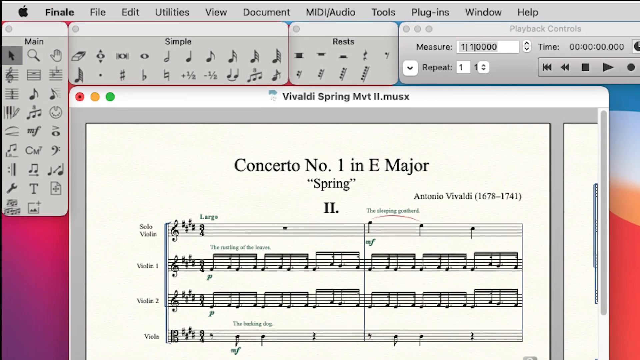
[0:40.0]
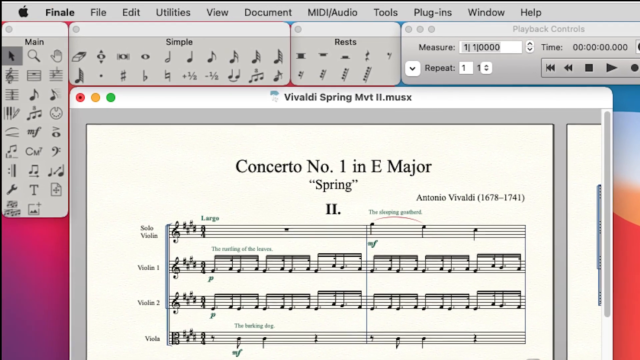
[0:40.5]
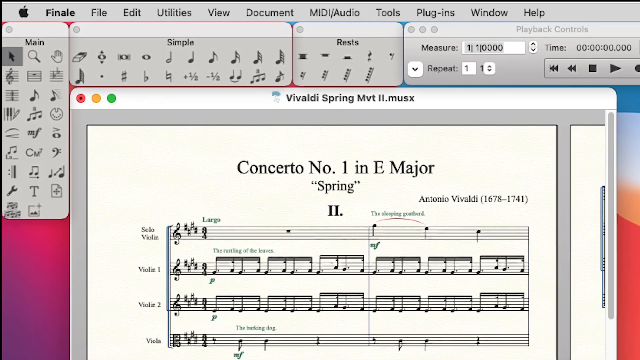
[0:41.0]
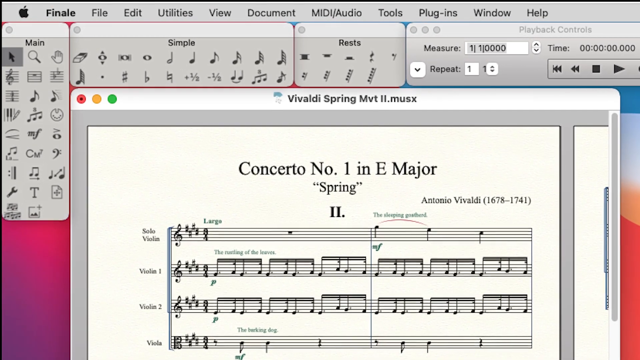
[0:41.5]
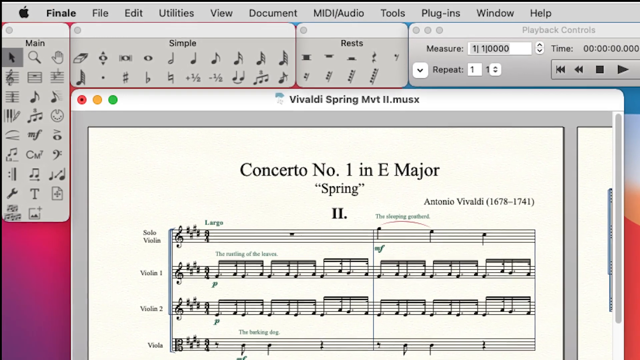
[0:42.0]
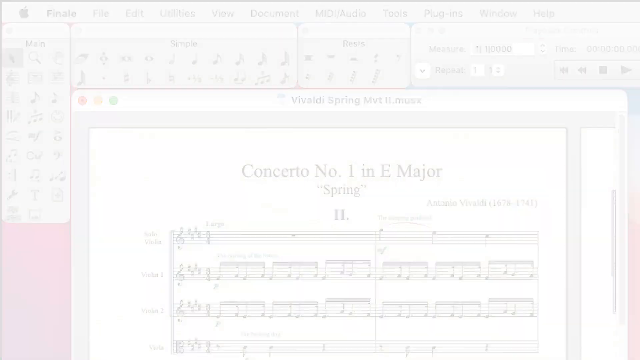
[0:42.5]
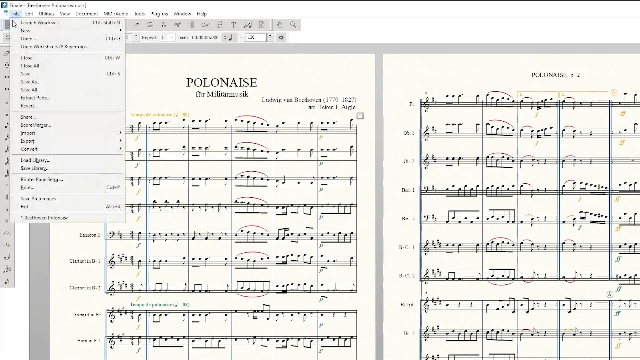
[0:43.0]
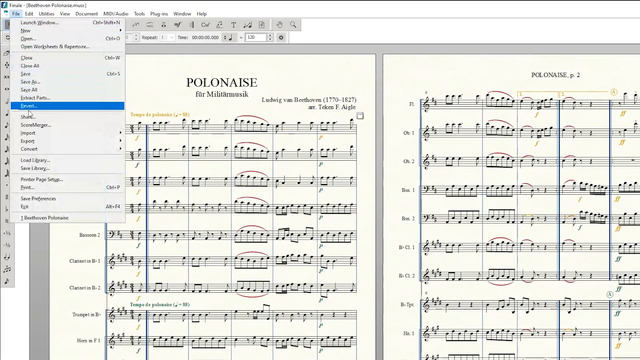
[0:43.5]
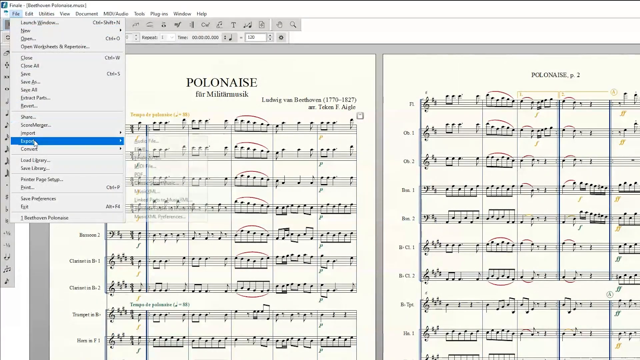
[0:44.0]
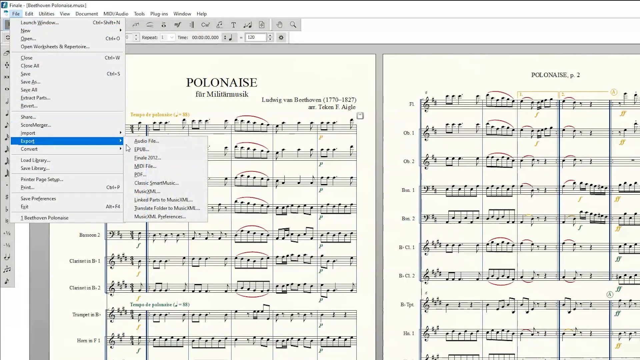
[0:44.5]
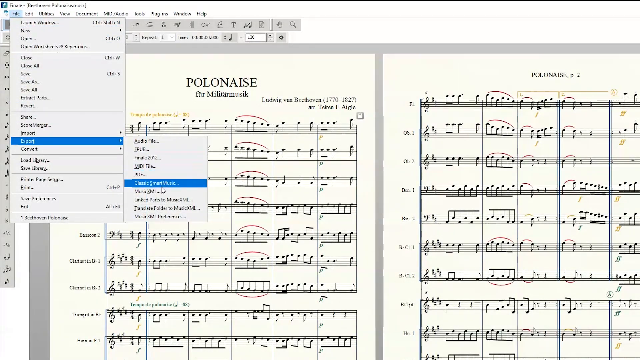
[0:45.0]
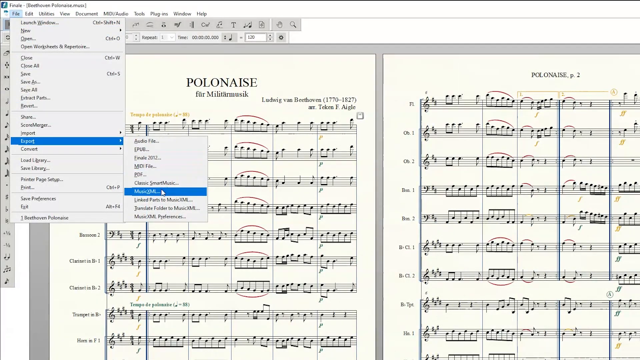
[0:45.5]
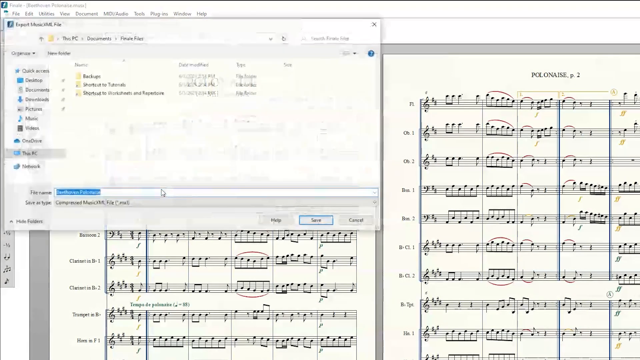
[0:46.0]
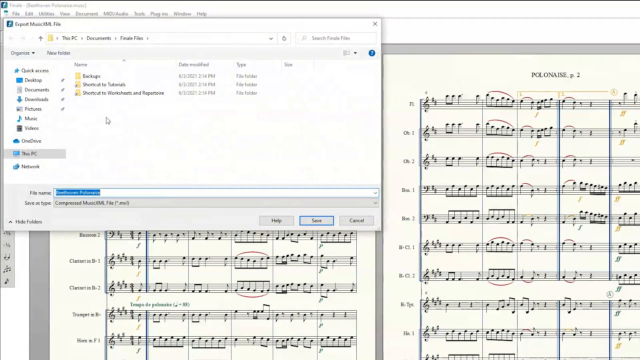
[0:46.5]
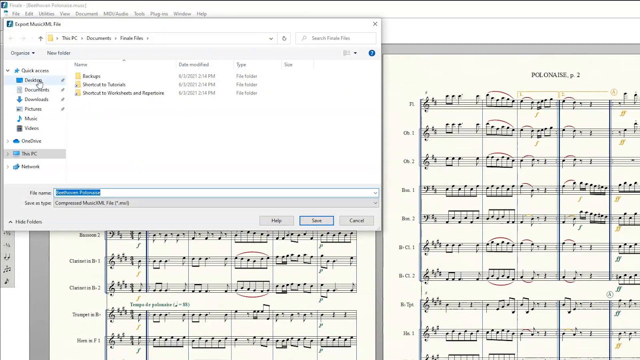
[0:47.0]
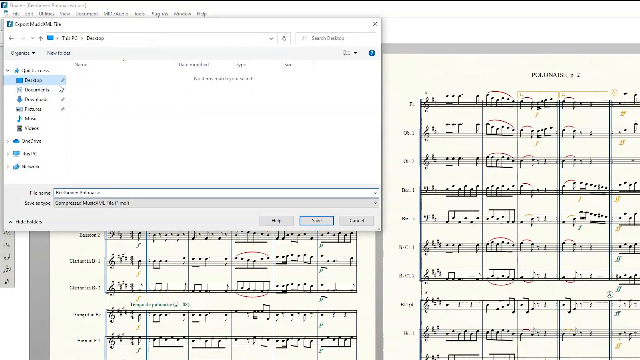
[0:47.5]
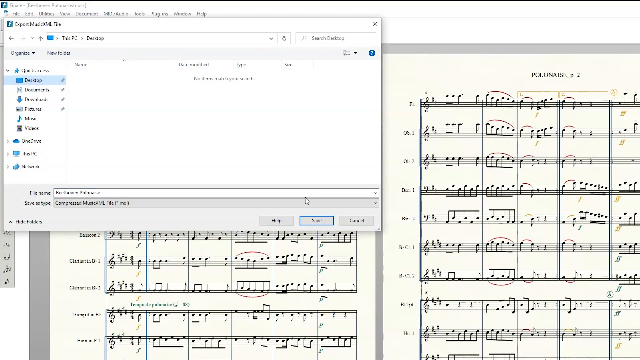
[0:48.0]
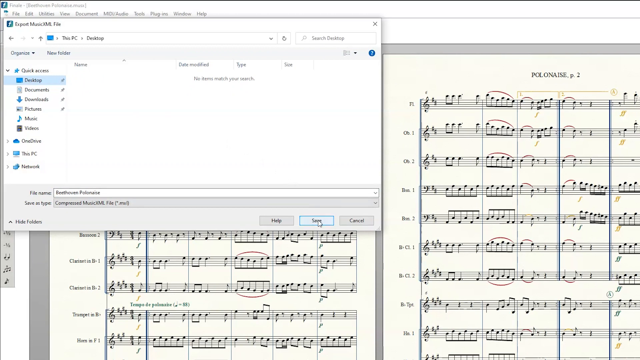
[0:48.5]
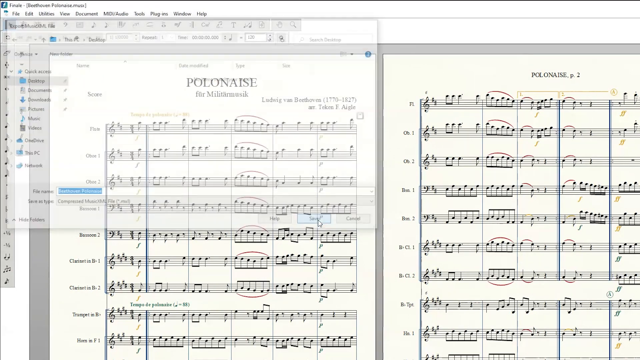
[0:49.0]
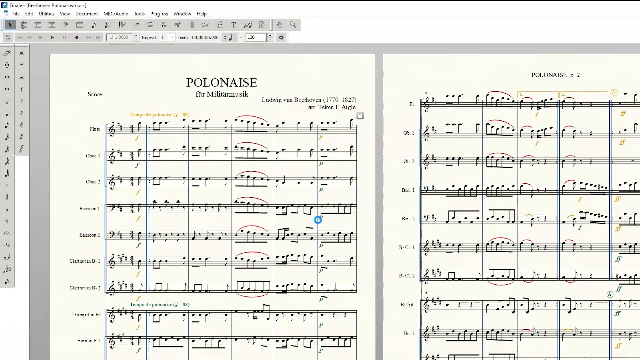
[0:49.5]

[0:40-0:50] Finale is demonstrated on a Windows operating system. The File drop-down menu is extended and the cursor scrolls through the options, then clicks the Export button. A file navigation window pops up with the desktop selected as the destination for the export. Save is clicked, and the next view shows just the first page of the Polonaise by Ludwig van Beethoven.